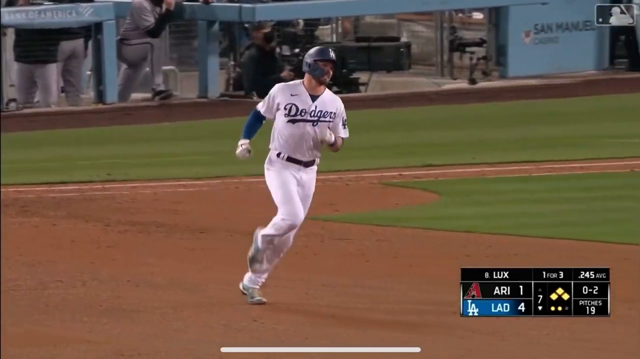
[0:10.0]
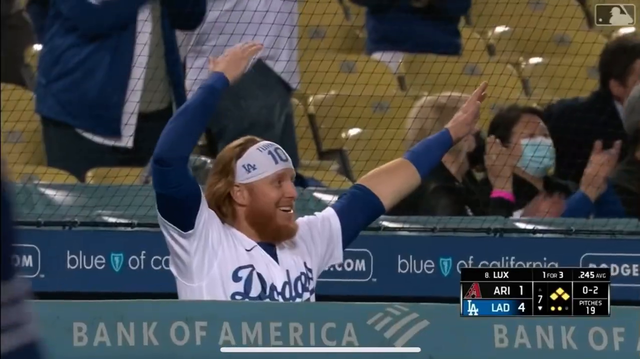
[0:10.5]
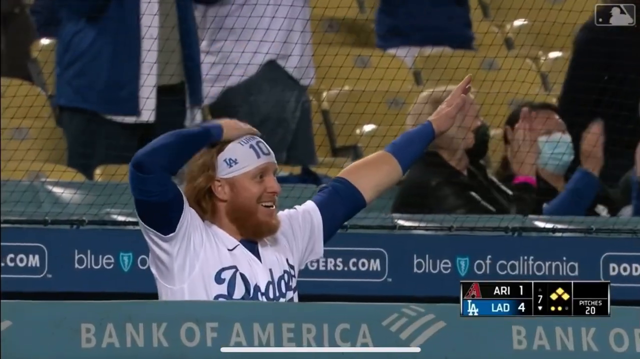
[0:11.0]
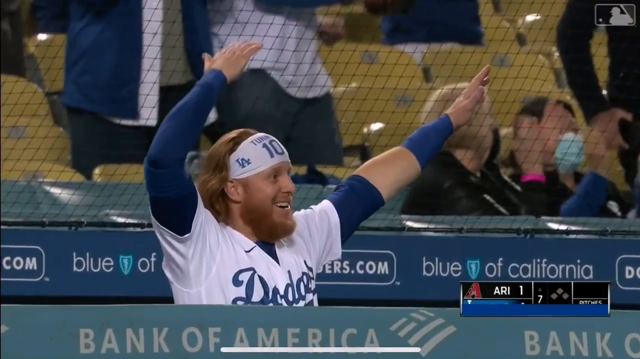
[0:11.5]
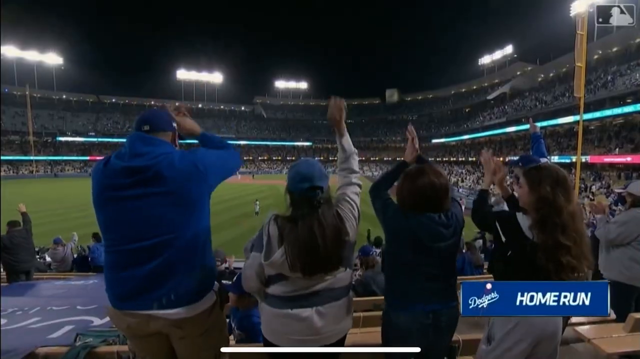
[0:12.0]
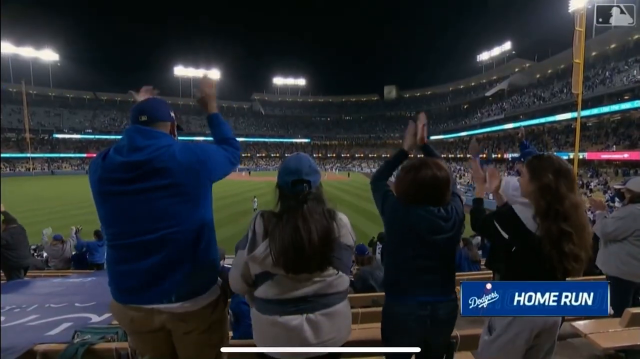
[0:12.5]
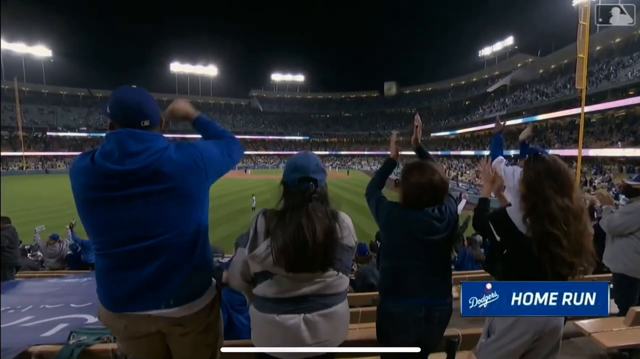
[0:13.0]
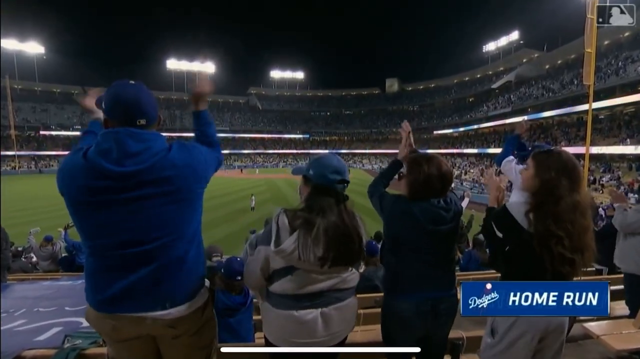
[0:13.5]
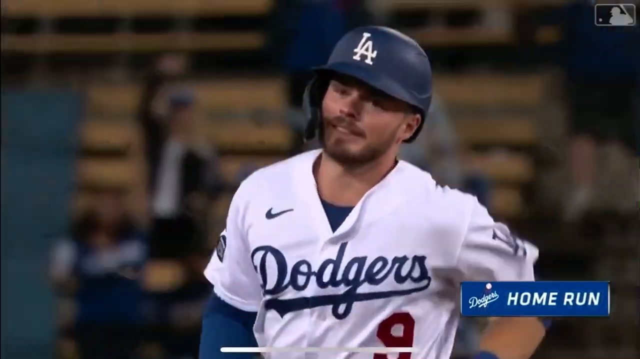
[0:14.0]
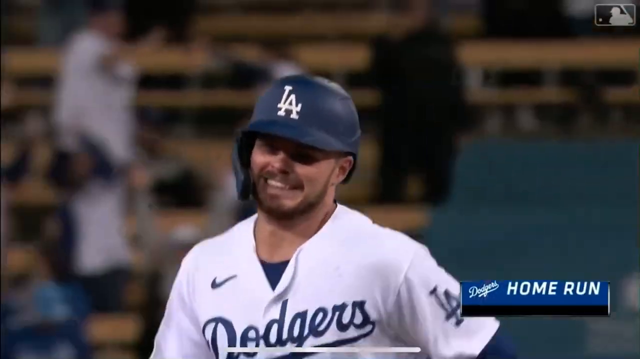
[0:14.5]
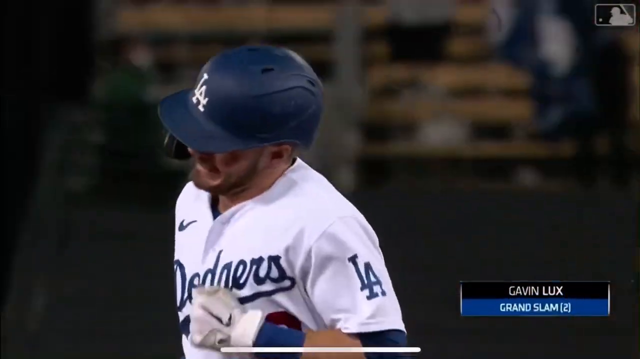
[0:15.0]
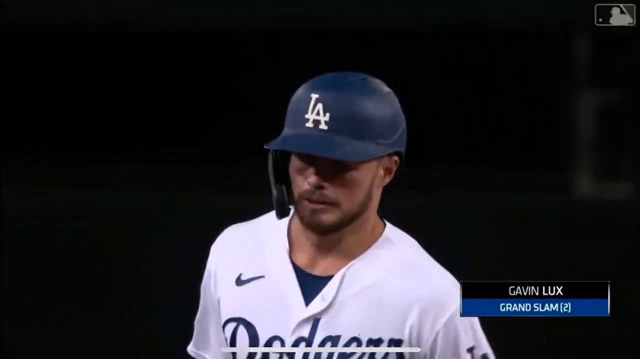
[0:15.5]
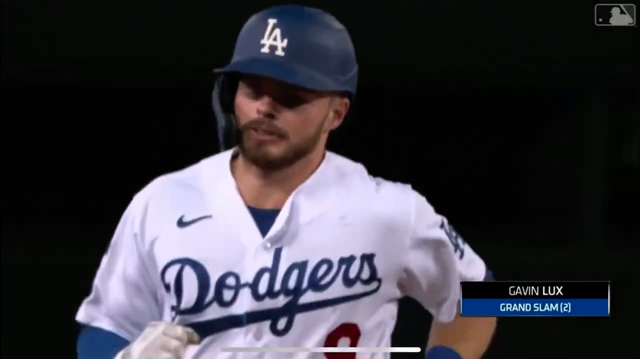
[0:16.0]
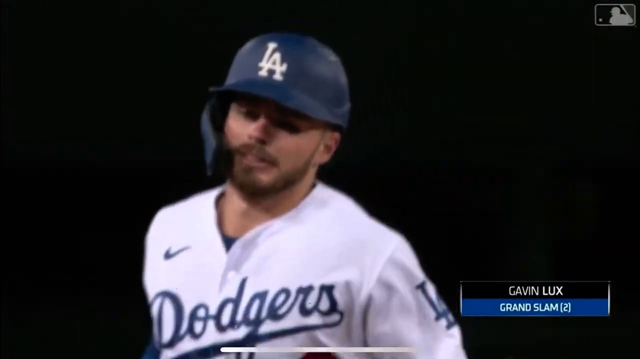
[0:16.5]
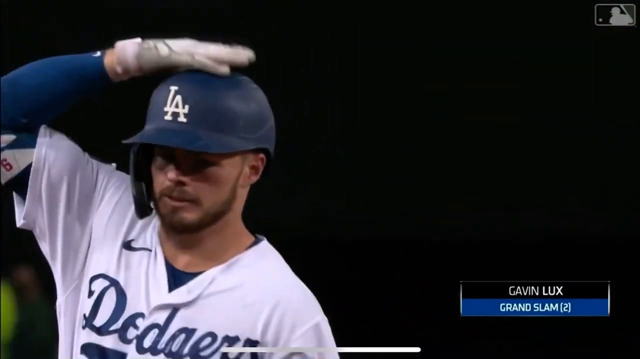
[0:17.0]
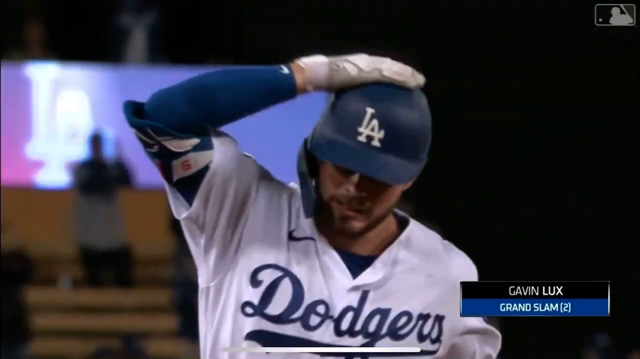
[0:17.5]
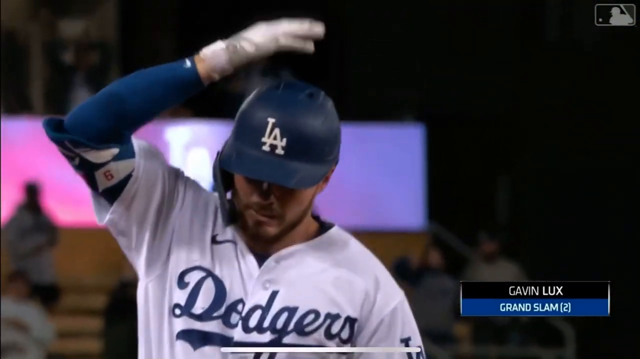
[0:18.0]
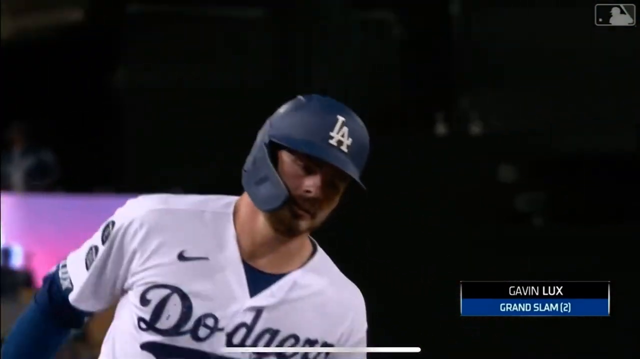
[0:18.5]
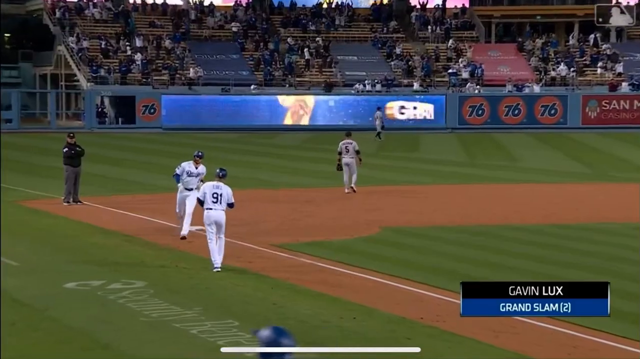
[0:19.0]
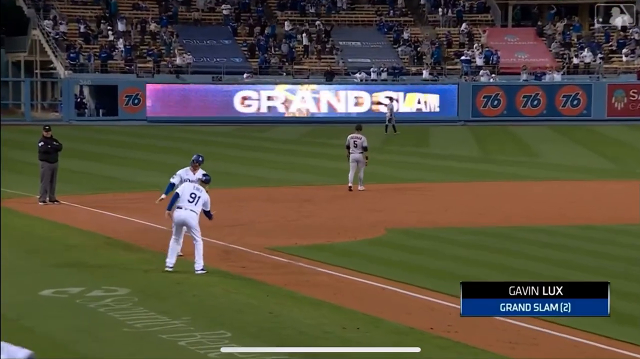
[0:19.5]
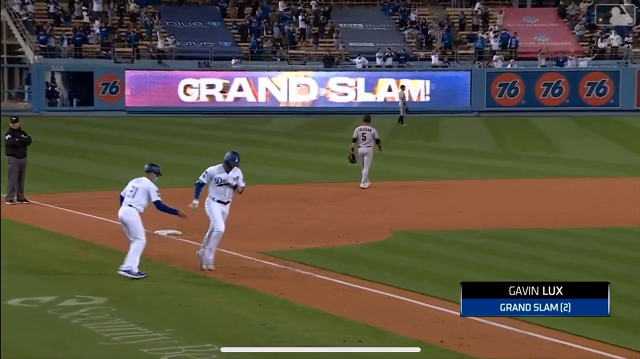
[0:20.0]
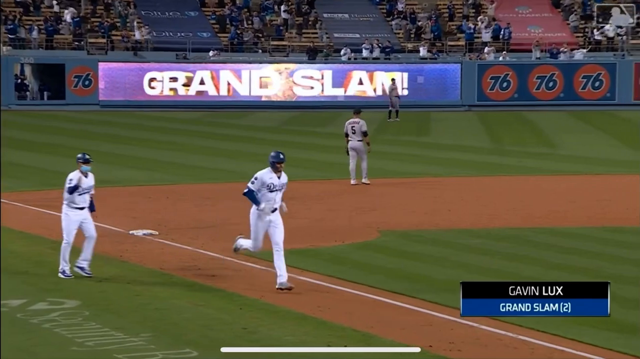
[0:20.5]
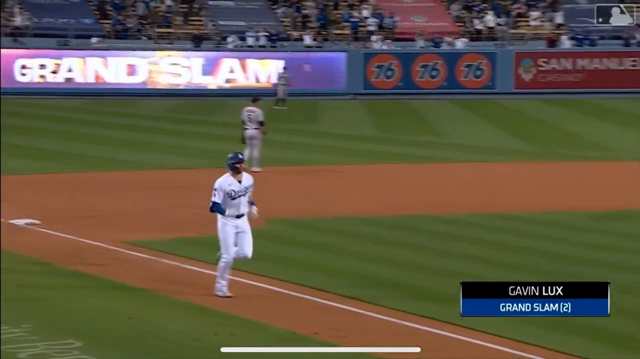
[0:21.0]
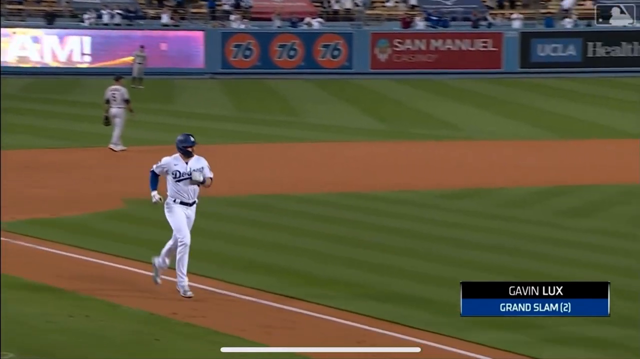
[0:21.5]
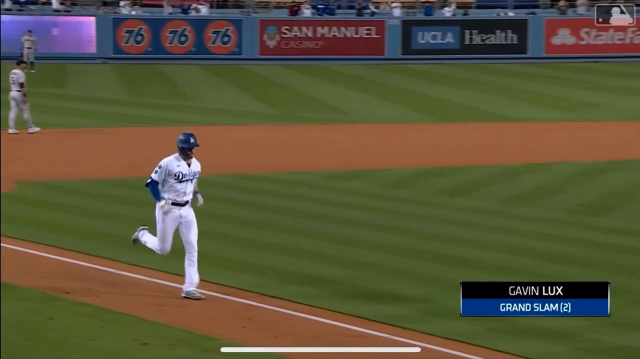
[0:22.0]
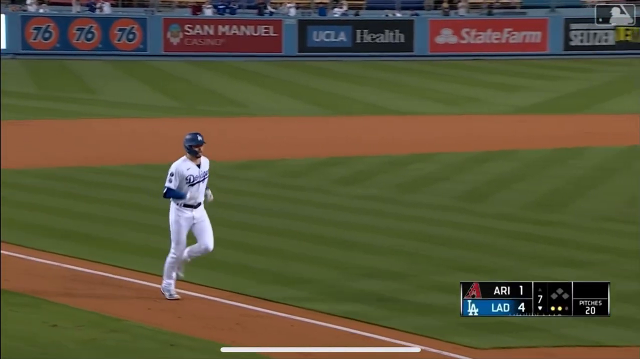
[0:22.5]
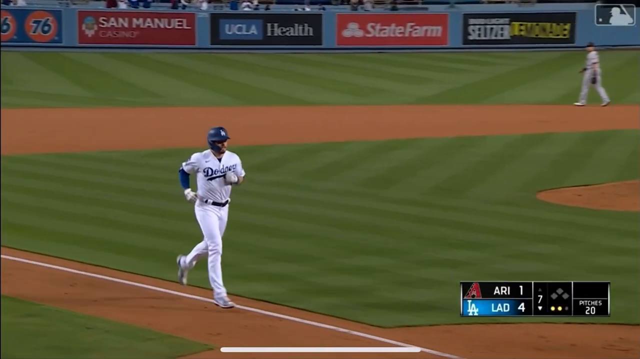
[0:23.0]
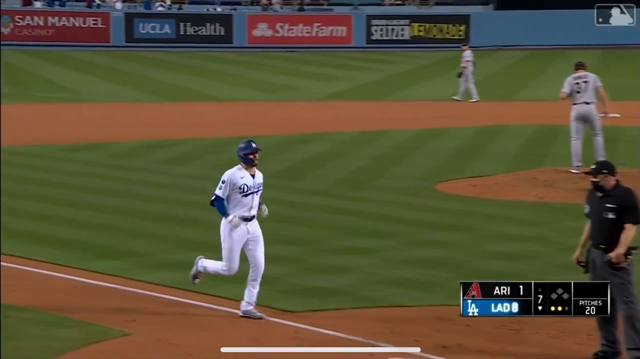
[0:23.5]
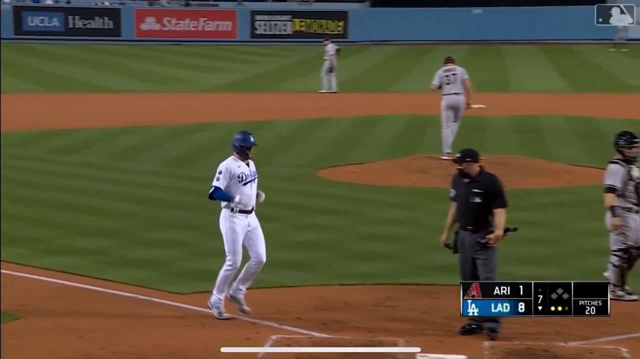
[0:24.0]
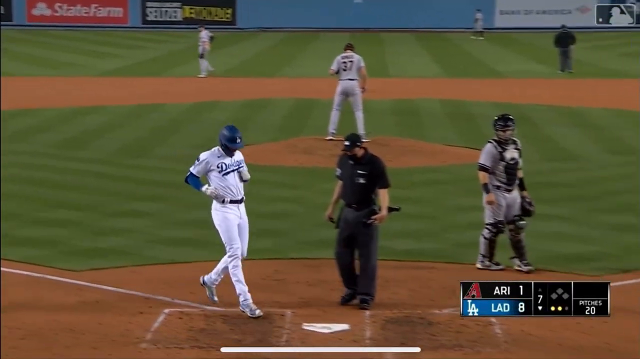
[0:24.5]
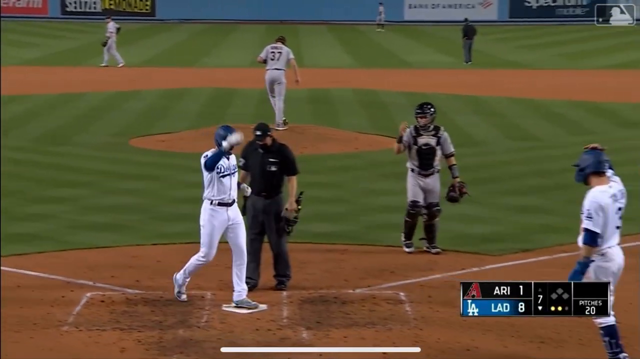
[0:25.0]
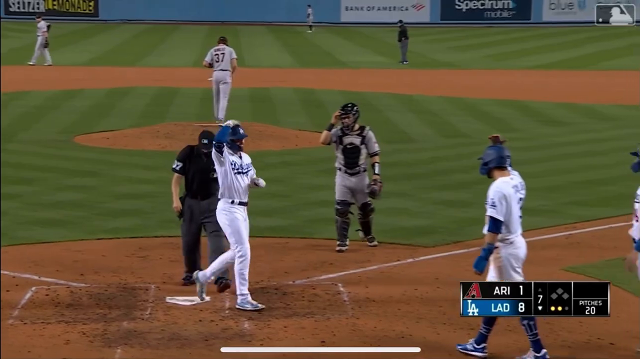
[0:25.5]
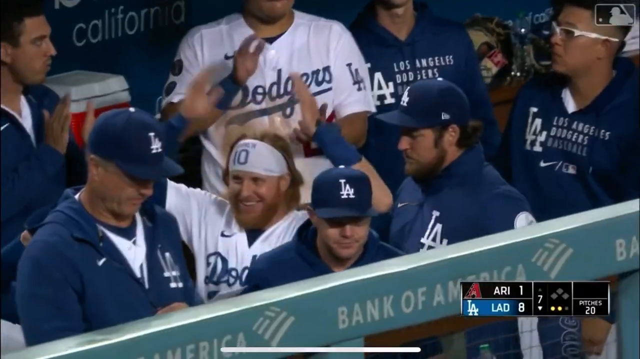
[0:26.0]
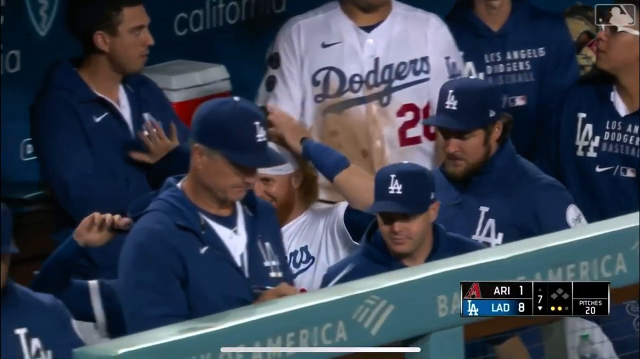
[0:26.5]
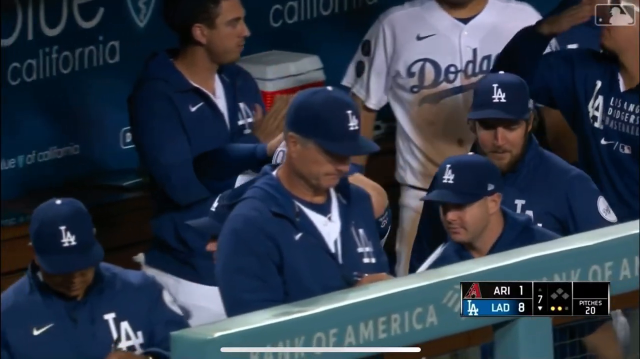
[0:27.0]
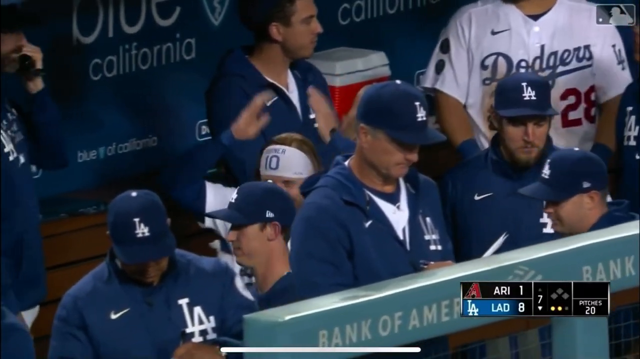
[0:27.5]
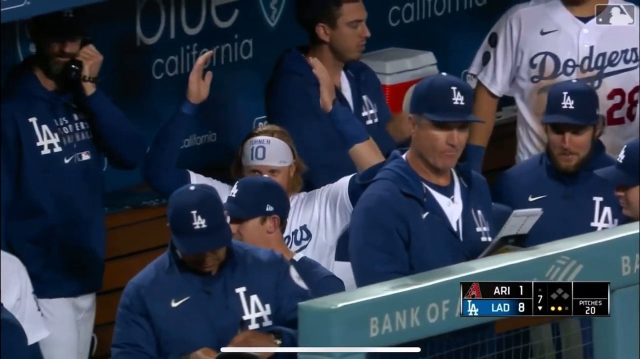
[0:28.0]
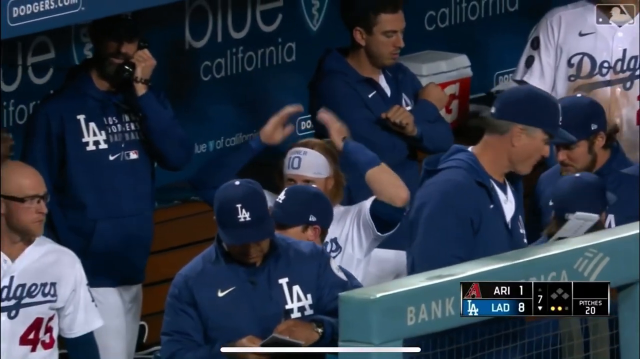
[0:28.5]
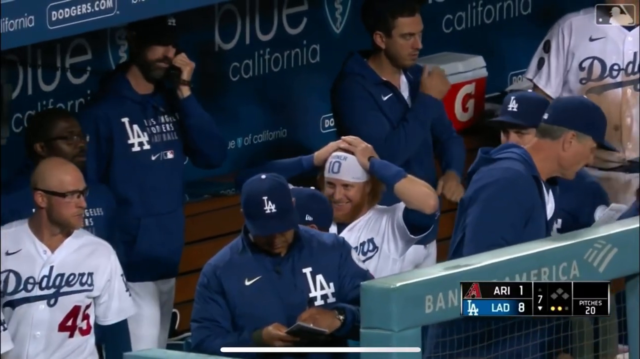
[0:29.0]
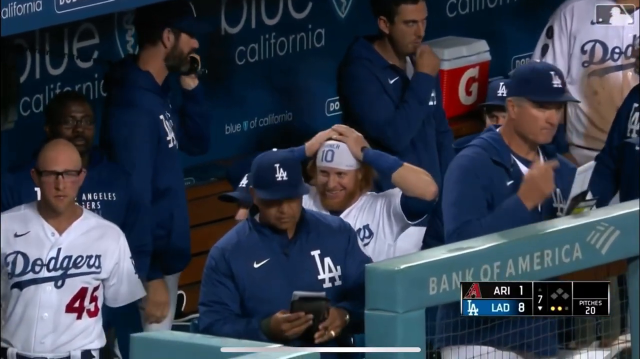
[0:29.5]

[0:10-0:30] The Dodgers player who hit the grand slam is briefly shown running. The view switches to a player in the dugout who is smiling, patting his head, and pointing, and then the camera switches to audience members in the stadium, all clapping and cheering. Text in the bottom right corner reads "home run Dodgers" and "Gavin Lux, Grand Slam." Gavin pats his head and continues running the bases, eventually reaching home plate. The Dodgers players in the dugout are shown celebrating and moving around, and number 10 on the Dodgers in the dugout pats his head with both hands. The score is now 8-1, up from 4-1 before, and there appear to be two outs.